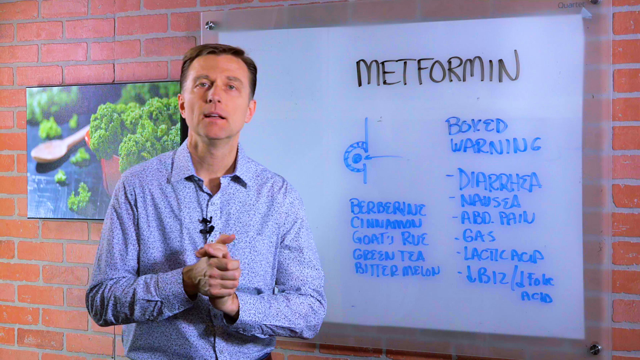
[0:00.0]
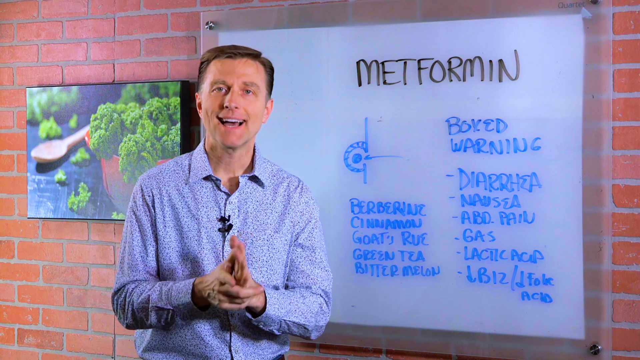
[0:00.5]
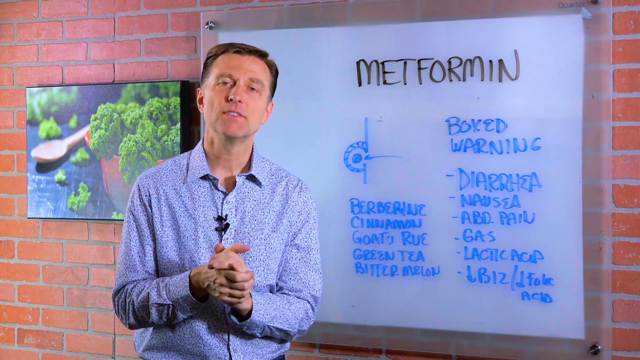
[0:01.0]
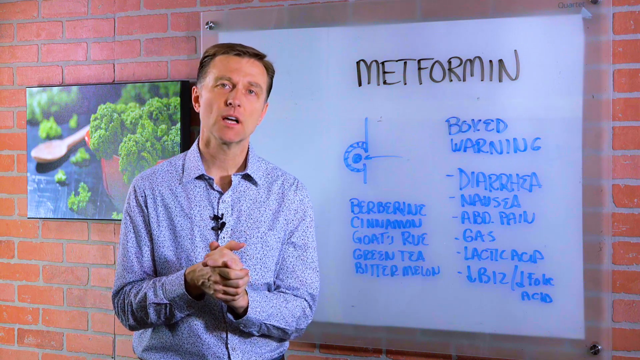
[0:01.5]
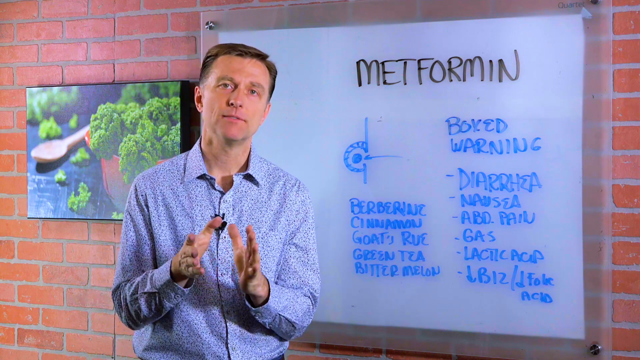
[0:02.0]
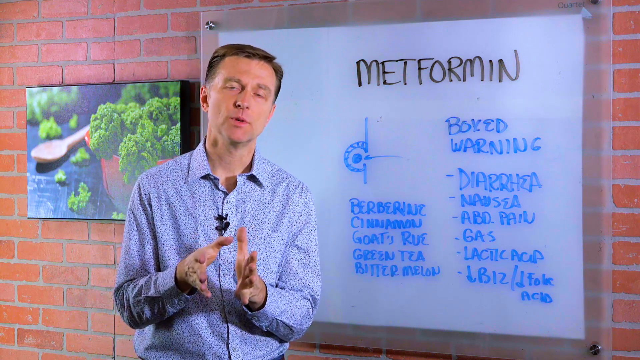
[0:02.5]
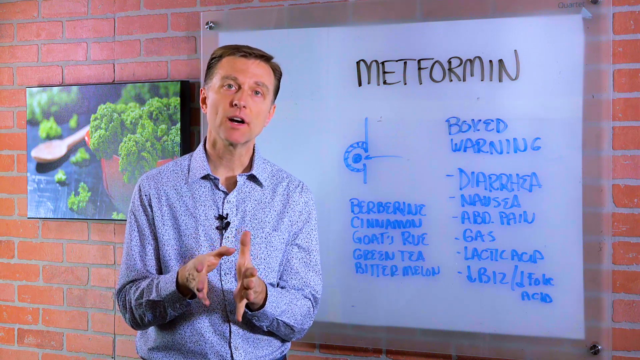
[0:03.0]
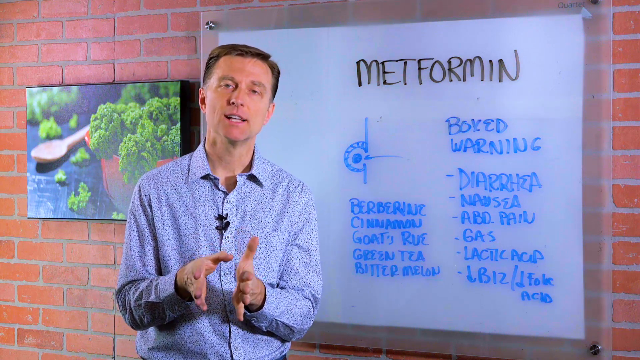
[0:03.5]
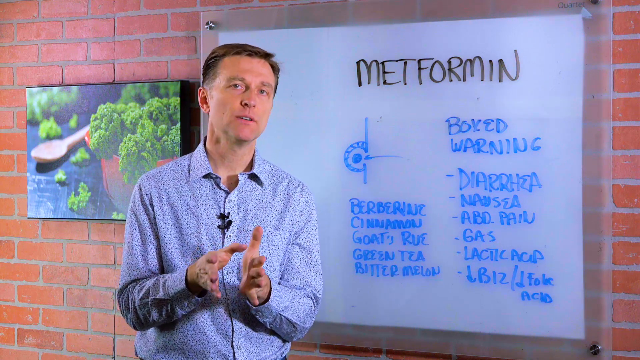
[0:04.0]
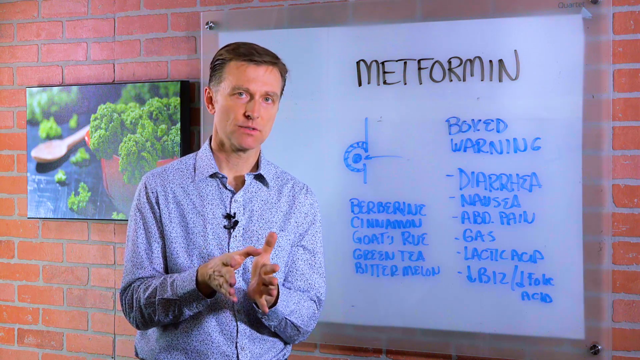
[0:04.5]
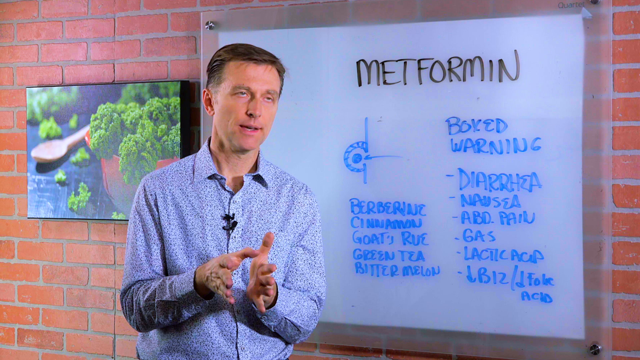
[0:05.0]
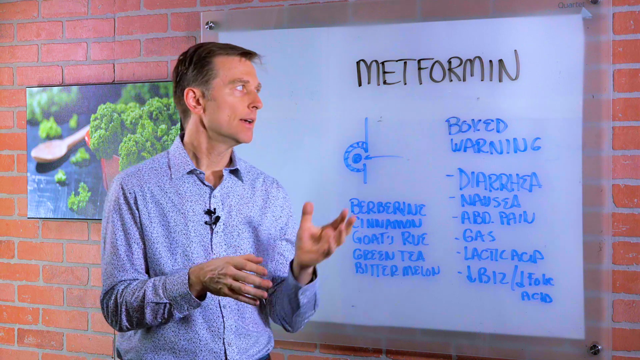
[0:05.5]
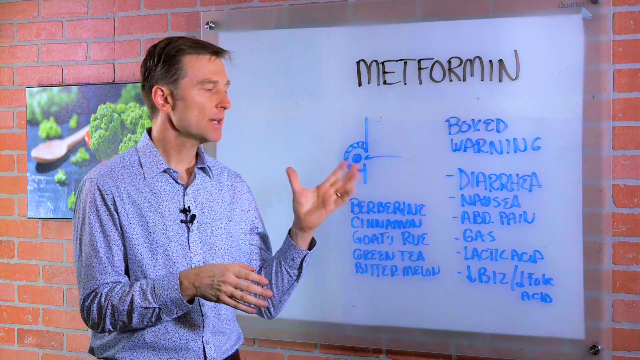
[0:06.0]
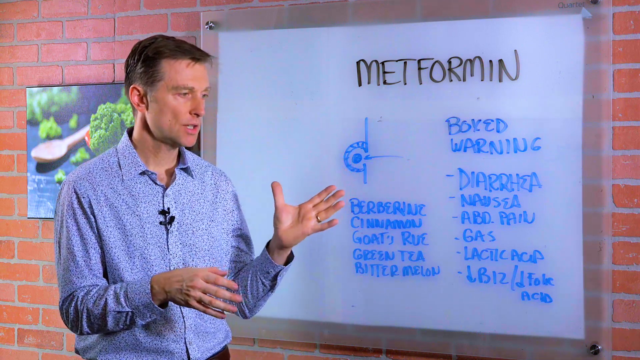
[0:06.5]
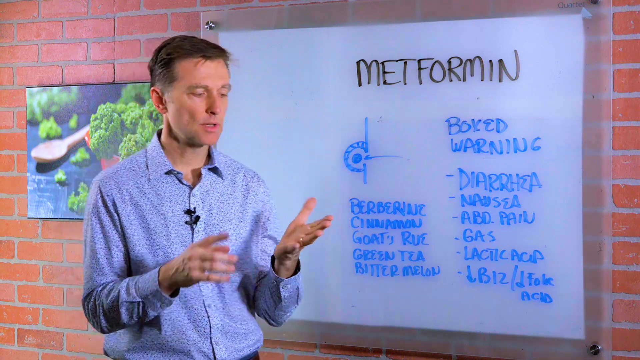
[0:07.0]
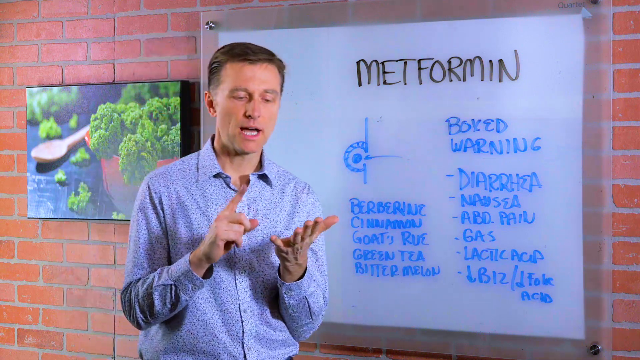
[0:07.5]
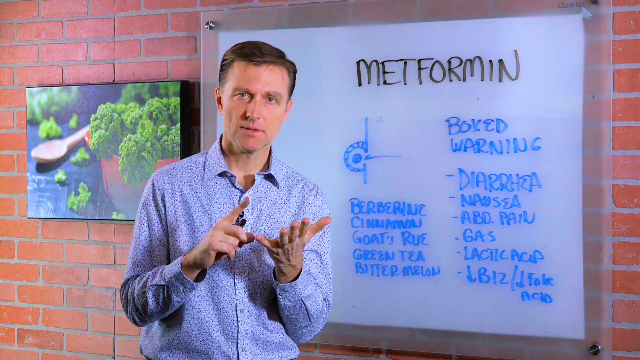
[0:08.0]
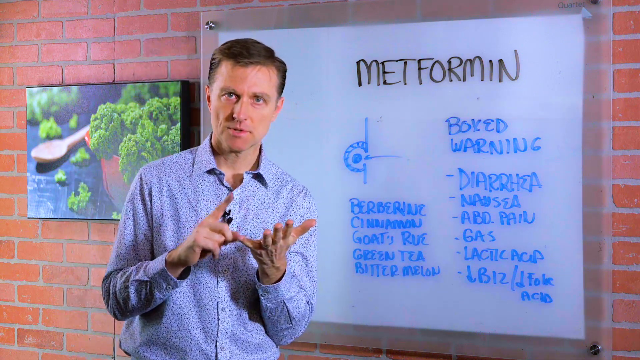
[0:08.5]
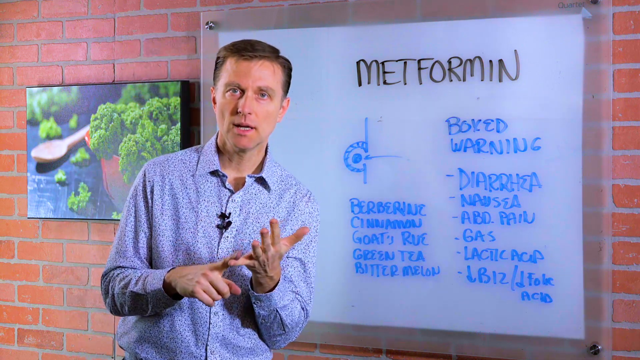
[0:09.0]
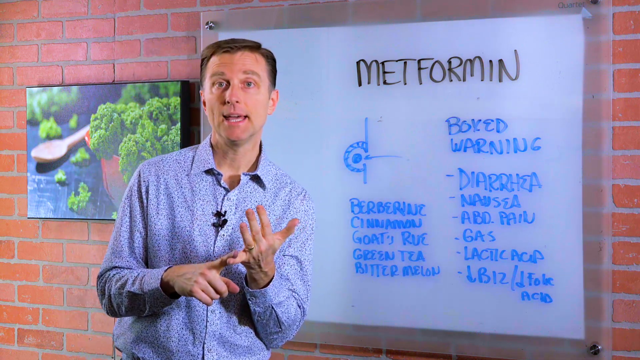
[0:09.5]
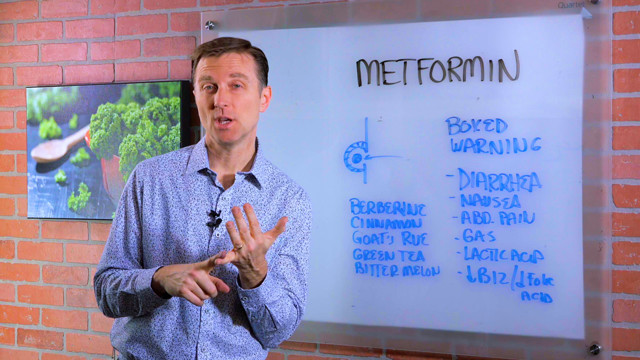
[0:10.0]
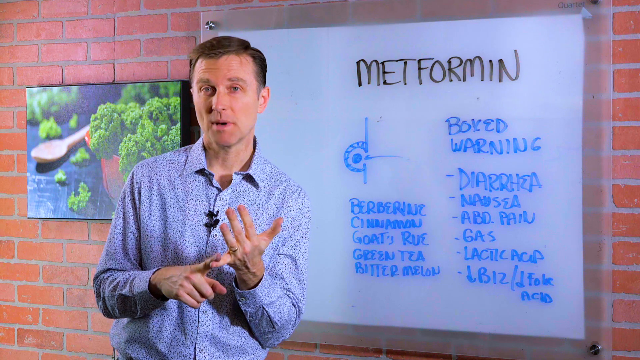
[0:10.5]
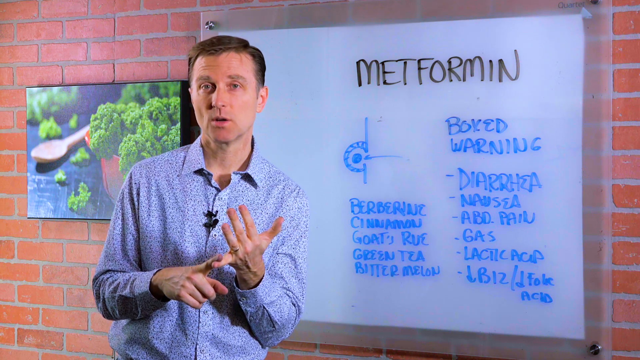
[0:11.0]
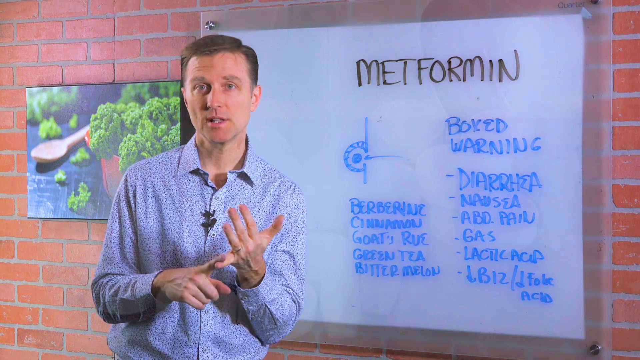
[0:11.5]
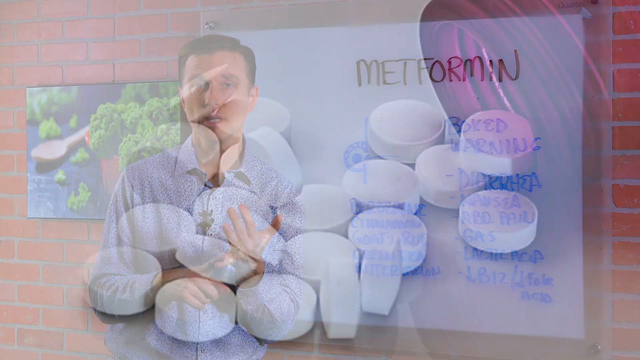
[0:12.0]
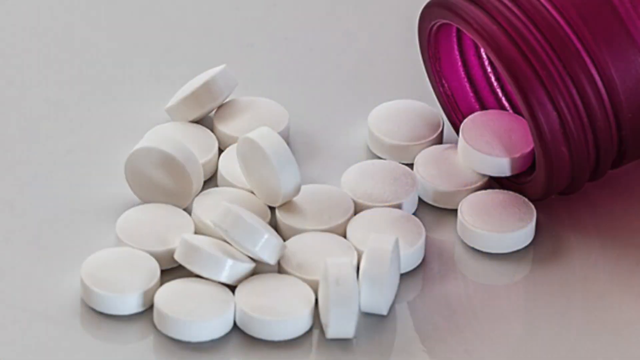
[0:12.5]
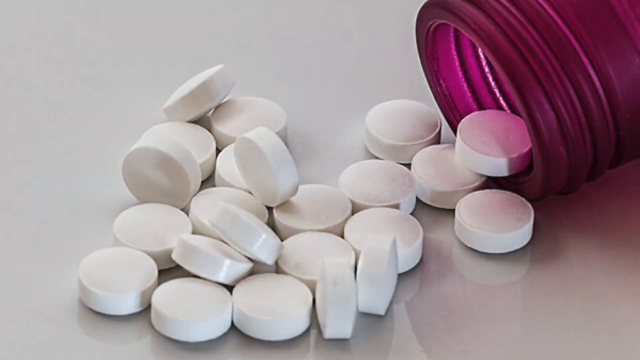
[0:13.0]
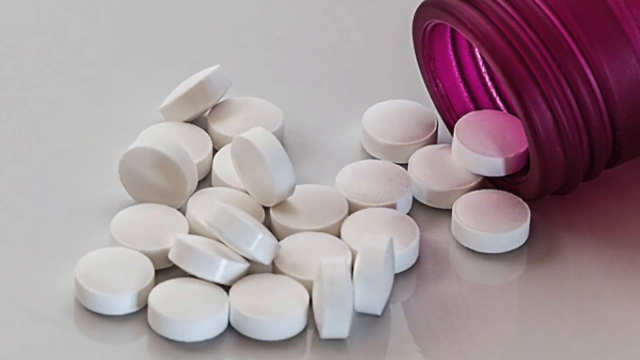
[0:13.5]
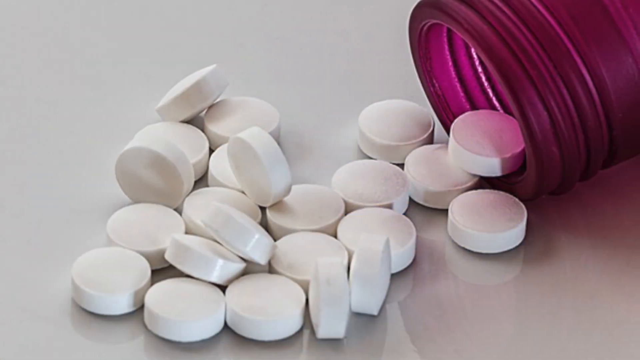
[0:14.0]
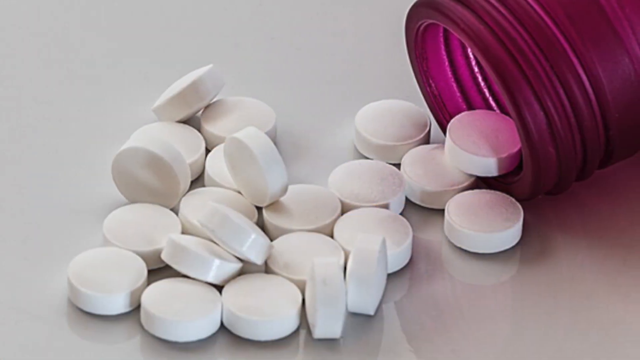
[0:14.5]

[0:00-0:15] A man in a paisley blue dress shirt stands in front of a whiteboard with blue and black text on it. He has a microphone pinned to his shirt and gestures with his hands. The board behind him has text in two columns, a drawn diagram, and a header above. The header is in black and reads "metformin." On the left side is the diagram, and underneath it are the words "berberine, cinnamon, goat's rue, green tea and bitter melon." The right column reads "boxed warning," then "diarrhea, nausea, abdominal pain, gas, lactic acid" and "B12 folic acid" with downward-facing arrows. The man gestures at the whiteboard behind him, then counts things off on his fingers. The video cuts to a stock photo of white pills in front of a brown glass bottle on a white background.